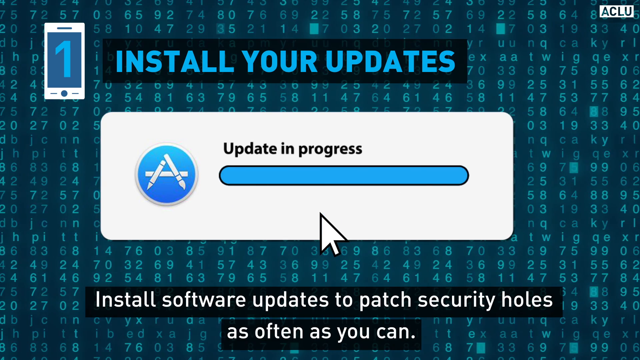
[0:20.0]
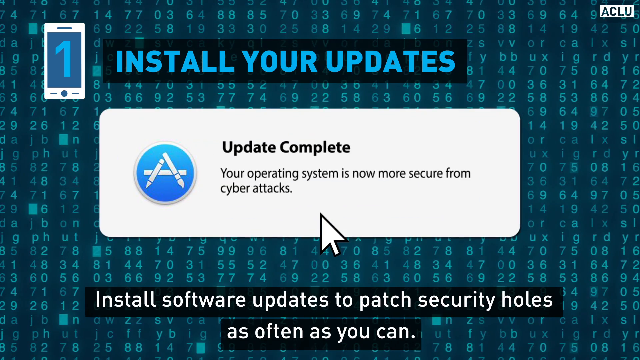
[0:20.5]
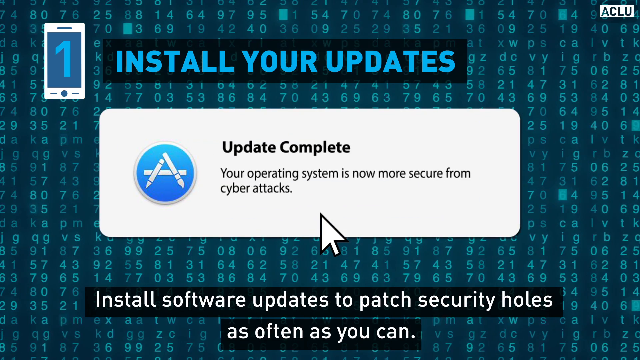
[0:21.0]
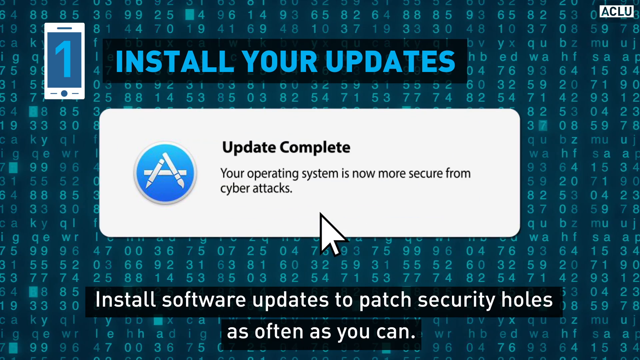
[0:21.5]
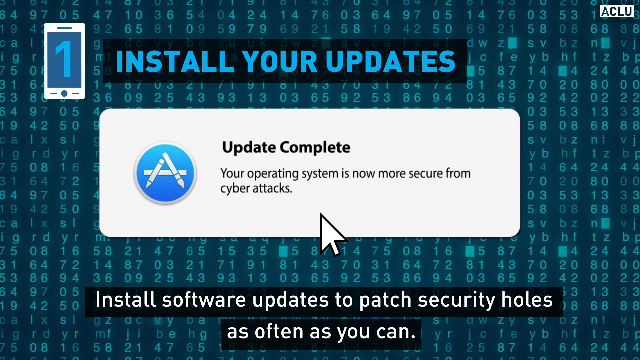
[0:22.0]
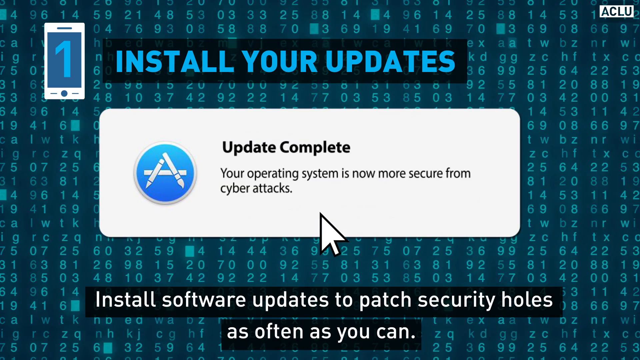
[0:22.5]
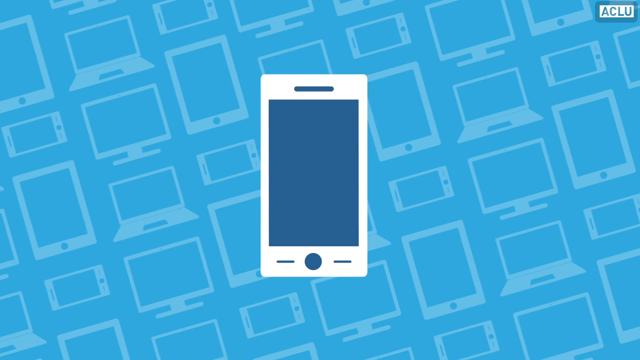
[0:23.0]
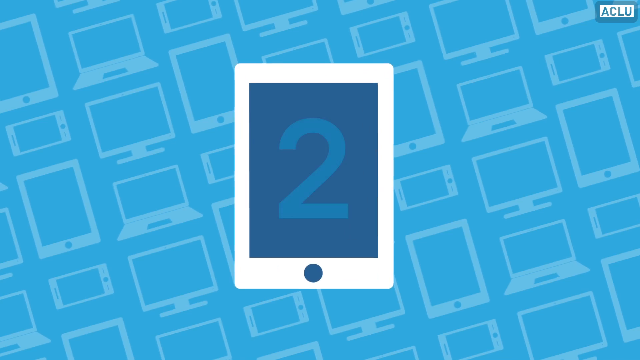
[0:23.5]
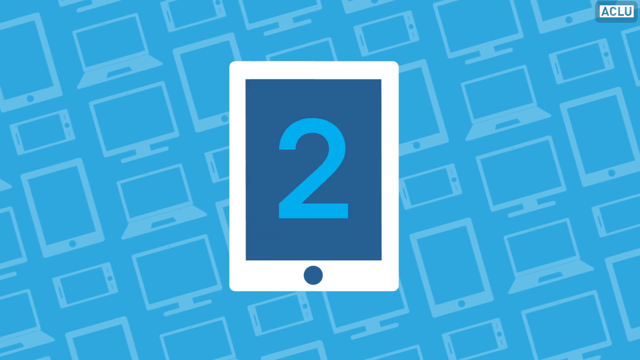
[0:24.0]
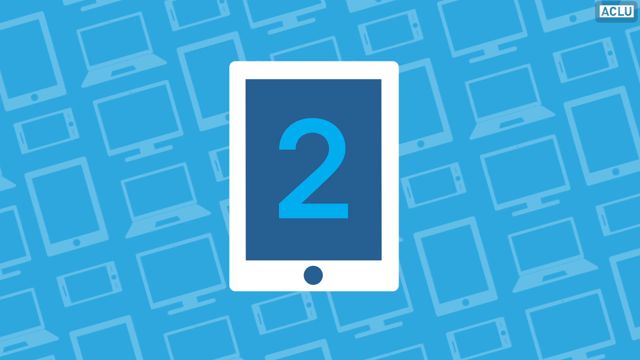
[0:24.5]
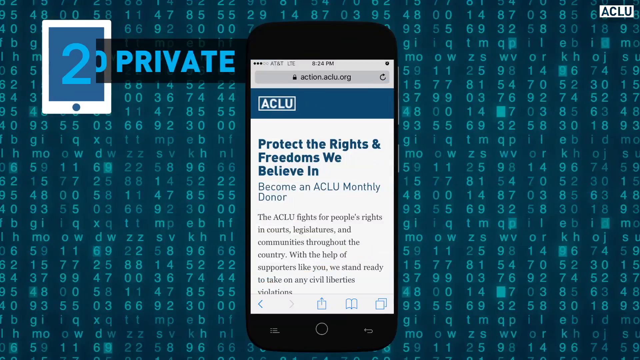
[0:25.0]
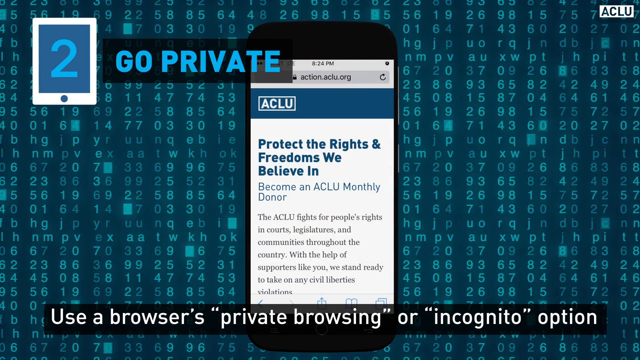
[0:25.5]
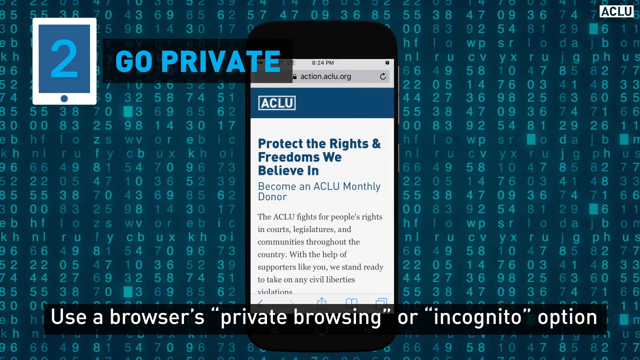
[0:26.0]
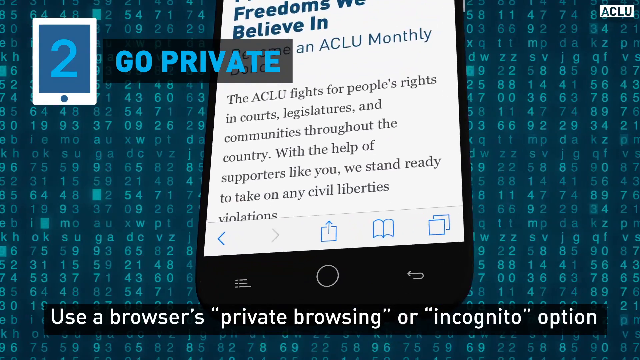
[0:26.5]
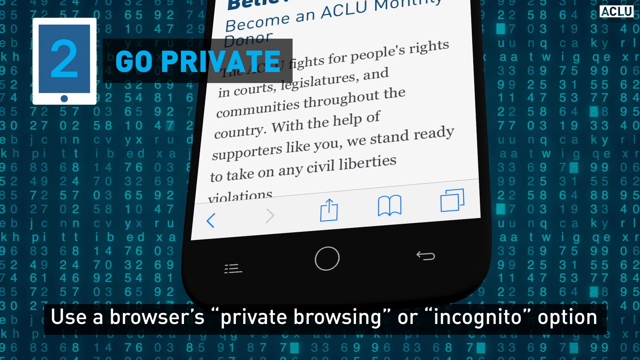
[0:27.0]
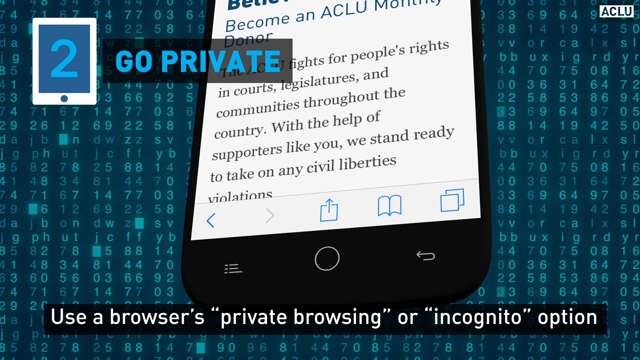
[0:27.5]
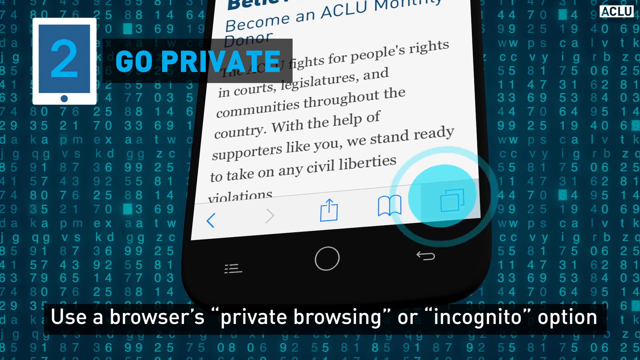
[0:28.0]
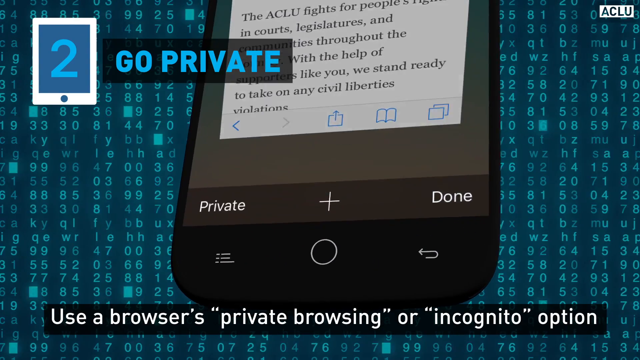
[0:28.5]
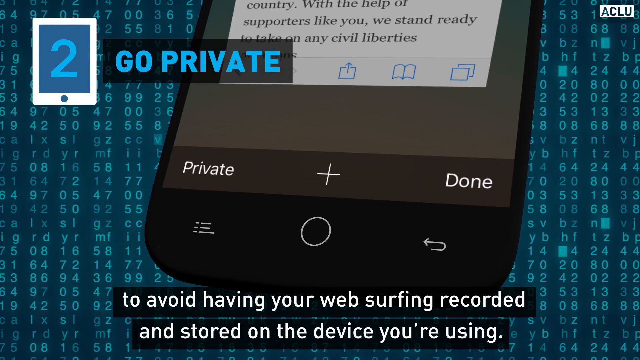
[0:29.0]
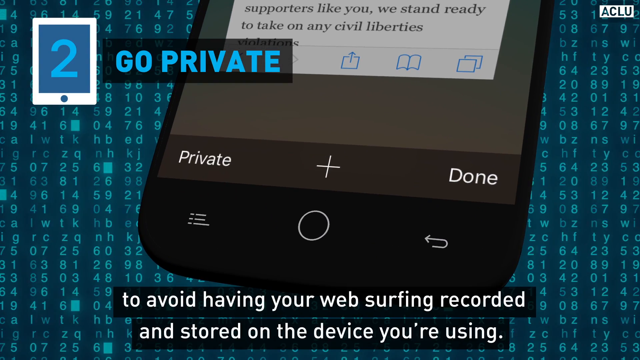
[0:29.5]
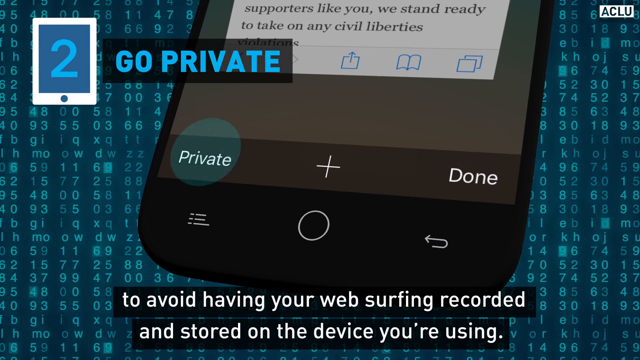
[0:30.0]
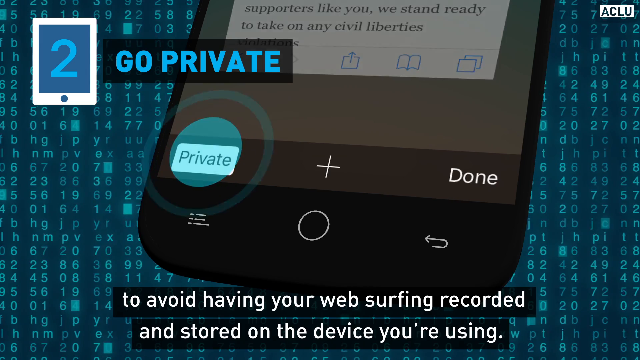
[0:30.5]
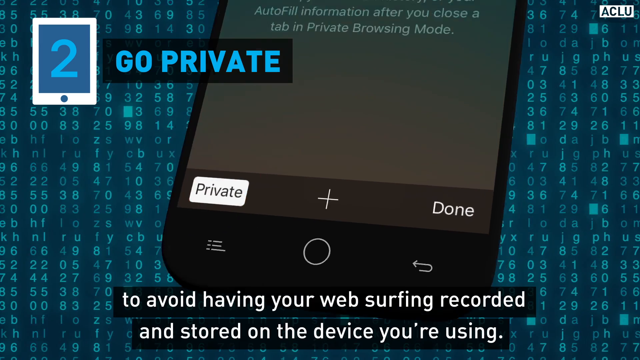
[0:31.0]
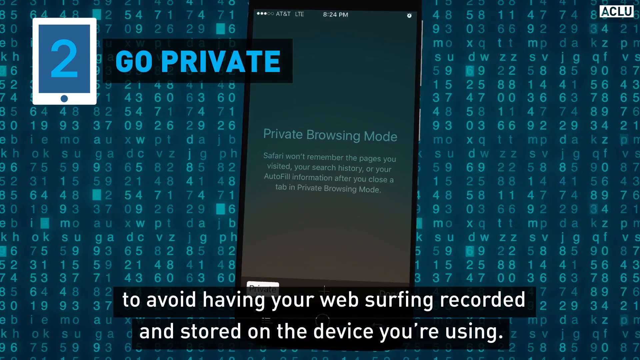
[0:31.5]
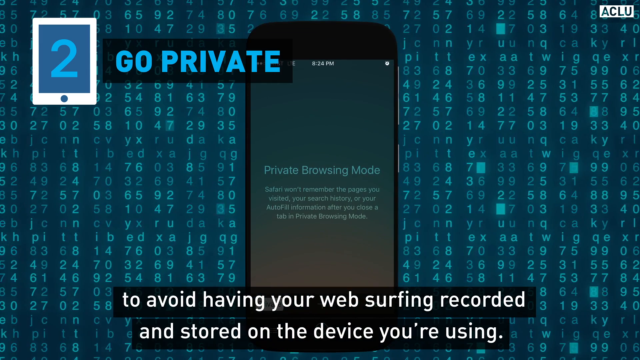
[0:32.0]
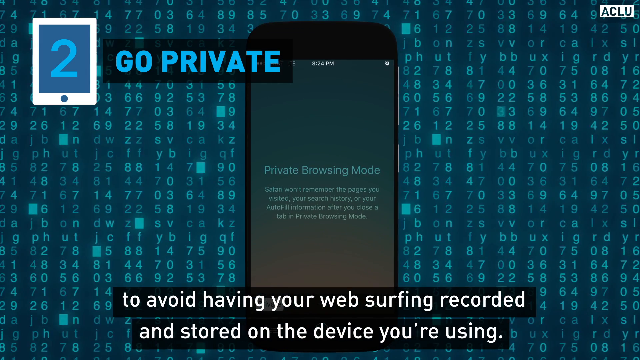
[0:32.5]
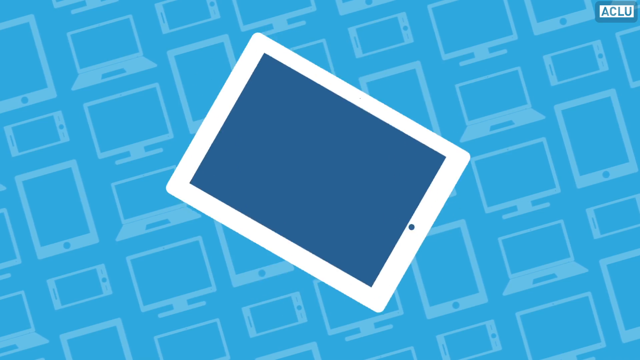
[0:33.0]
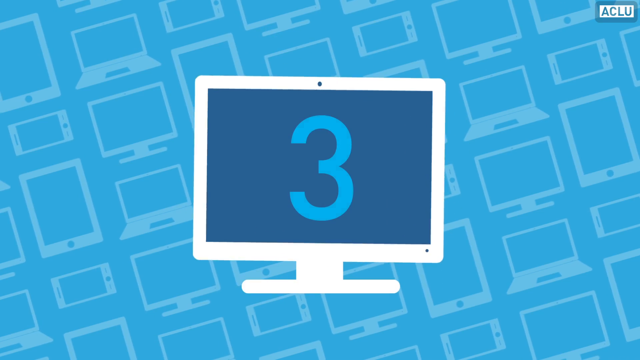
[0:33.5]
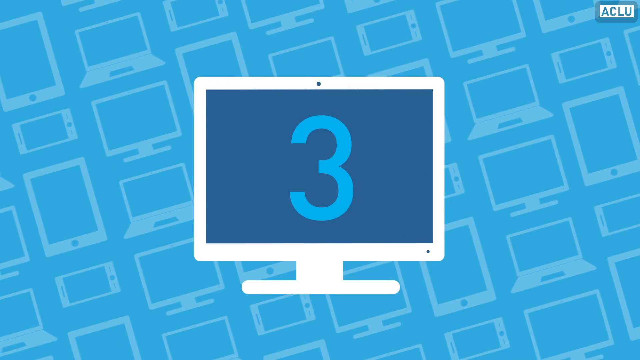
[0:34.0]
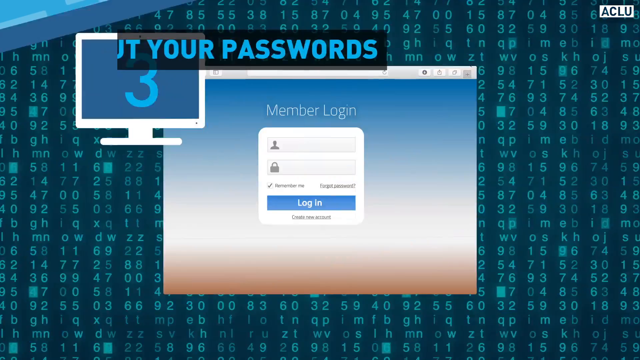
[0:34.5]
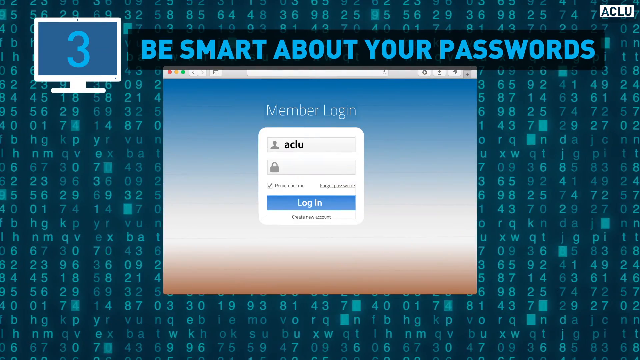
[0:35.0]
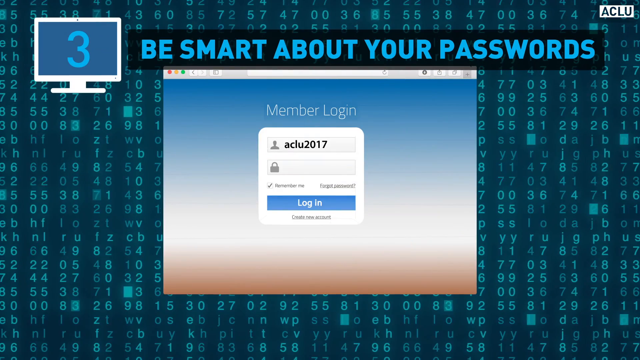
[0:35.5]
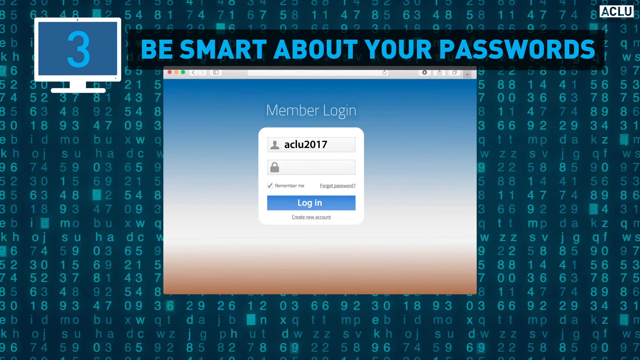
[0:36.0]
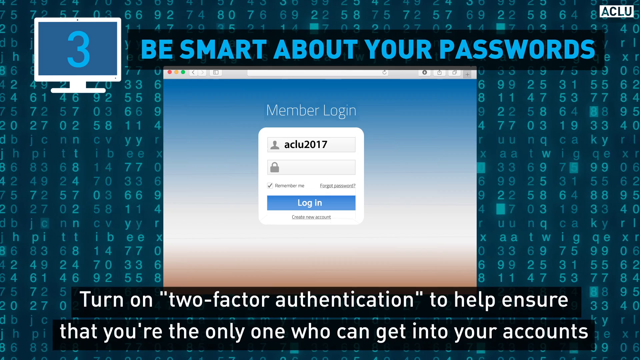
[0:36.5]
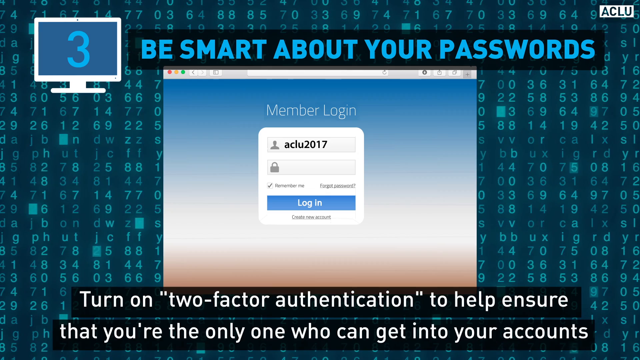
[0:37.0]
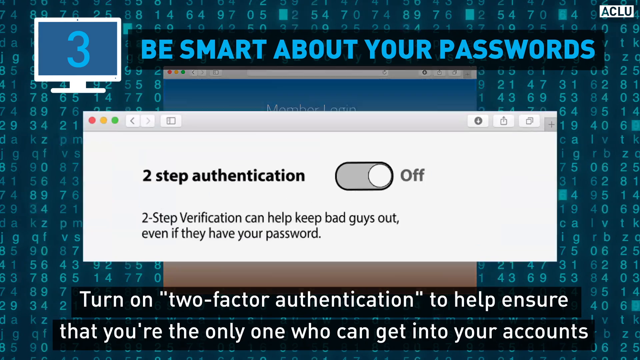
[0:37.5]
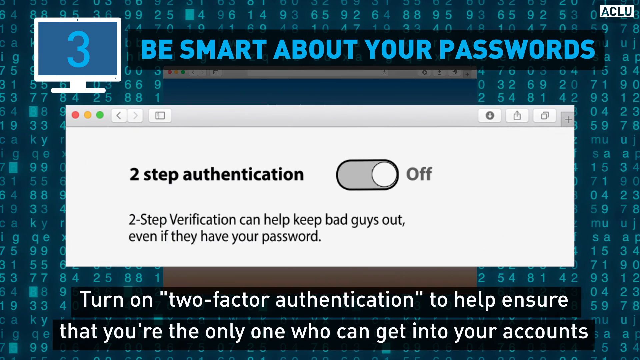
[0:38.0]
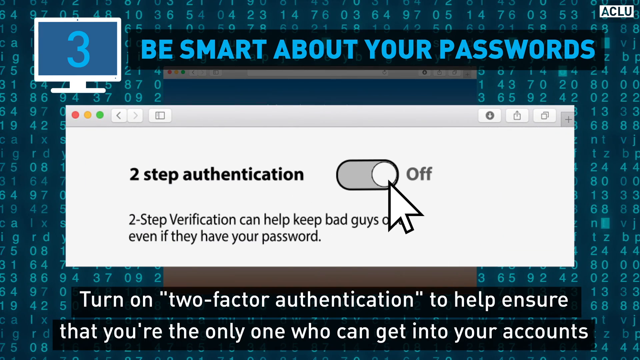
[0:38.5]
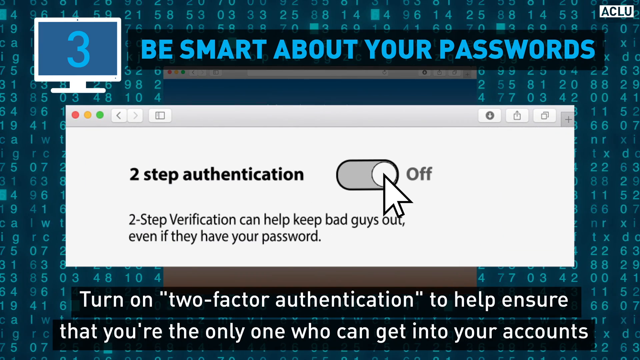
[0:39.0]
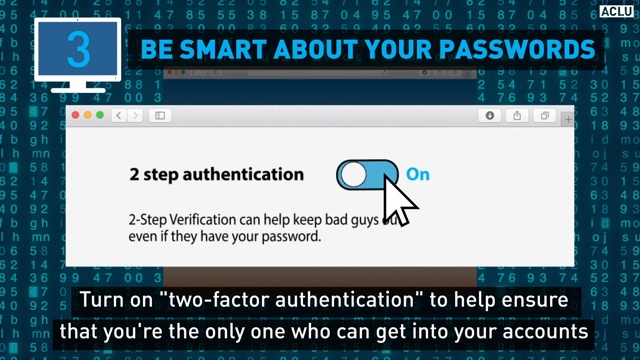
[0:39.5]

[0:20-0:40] The sequence opens with "go private." A mobile phone appears with the text "protect the rights and freedoms we believe in." The video tells viewers to use private browsing or incognito mode on a mobile phone and shows how to do it. A private button and a done button are at the bottom of the phone screen. Then step number three appears: "be smart about your passwords." It encourages people to change their passwords once in a while and to turn on two-factor authentication to help ensure that they are the only one who can get into their accounts.